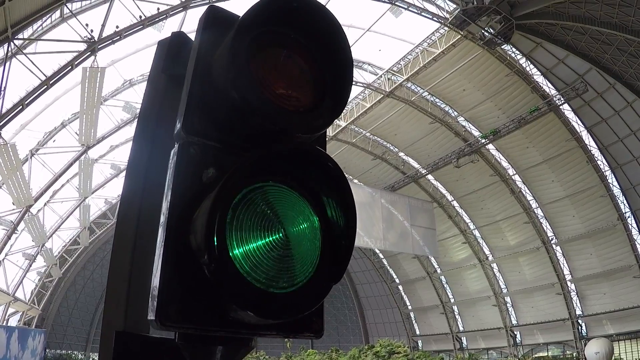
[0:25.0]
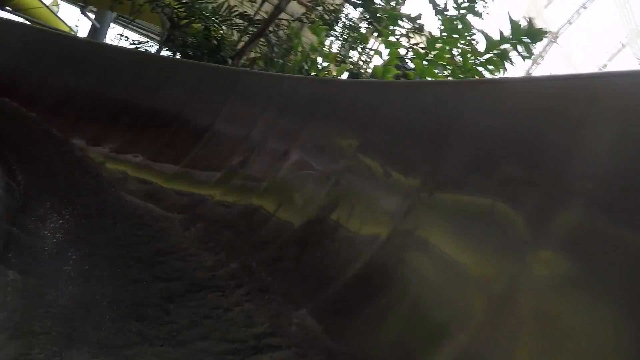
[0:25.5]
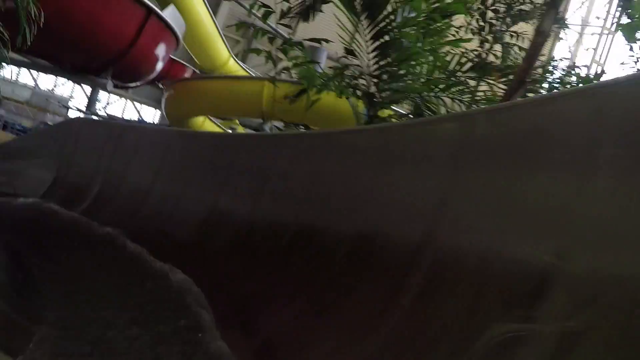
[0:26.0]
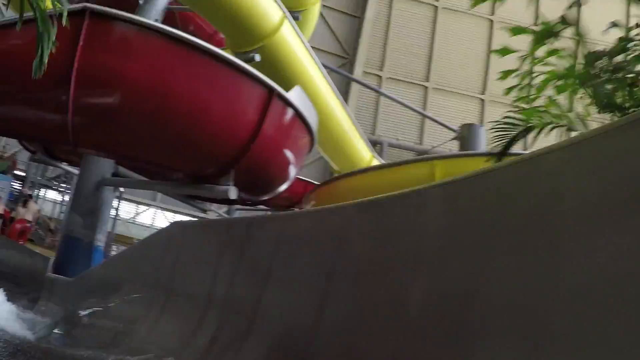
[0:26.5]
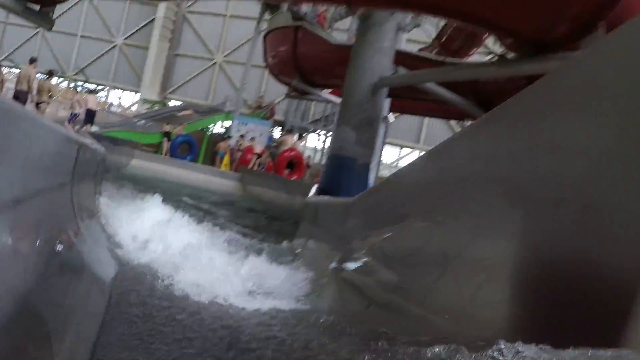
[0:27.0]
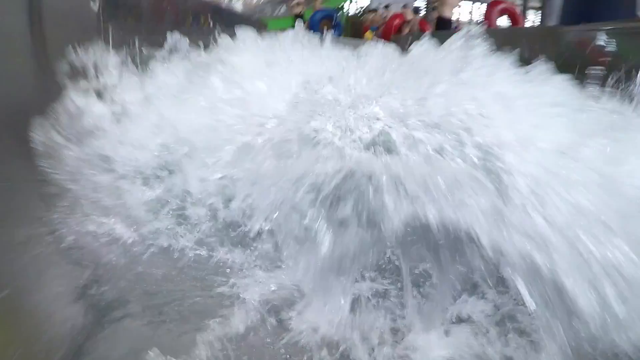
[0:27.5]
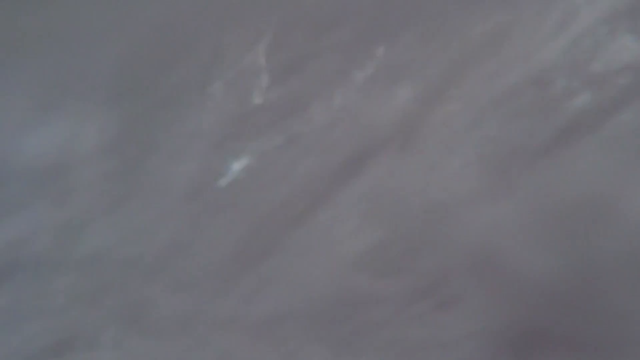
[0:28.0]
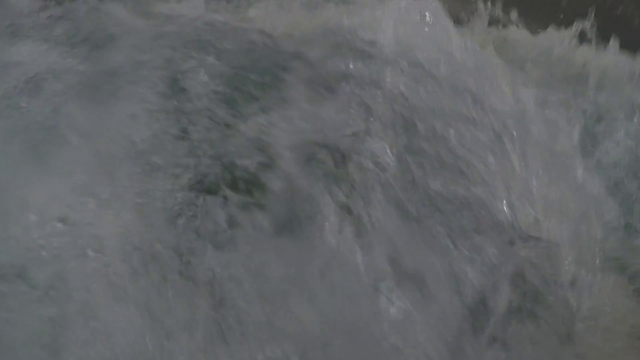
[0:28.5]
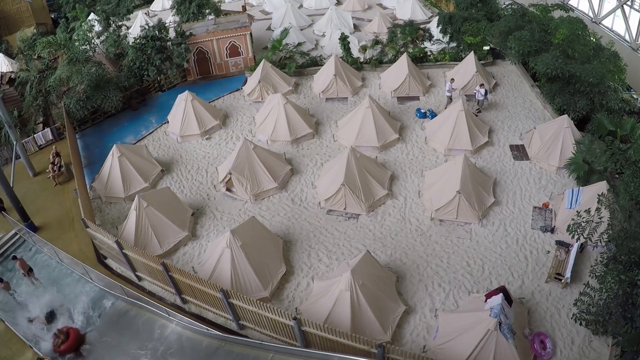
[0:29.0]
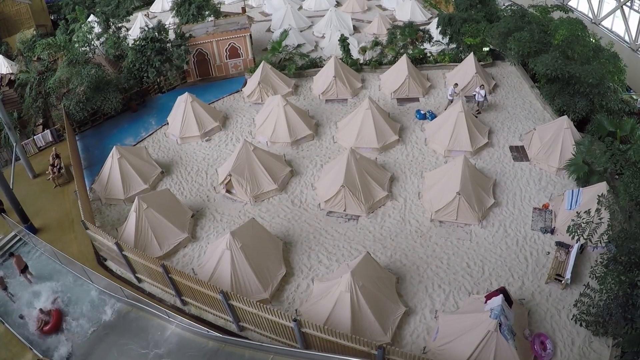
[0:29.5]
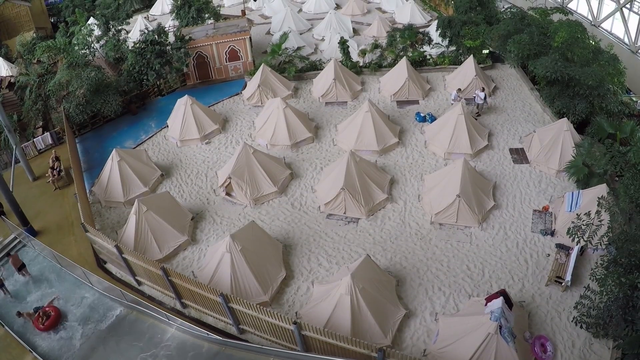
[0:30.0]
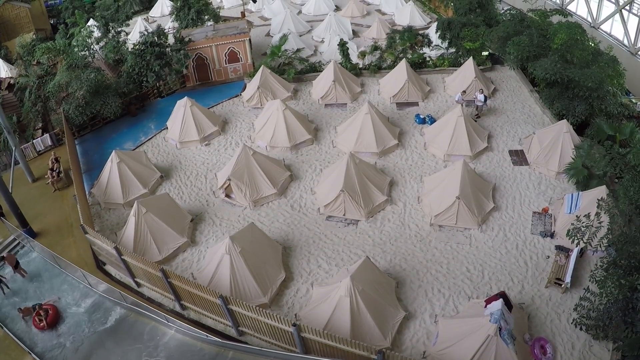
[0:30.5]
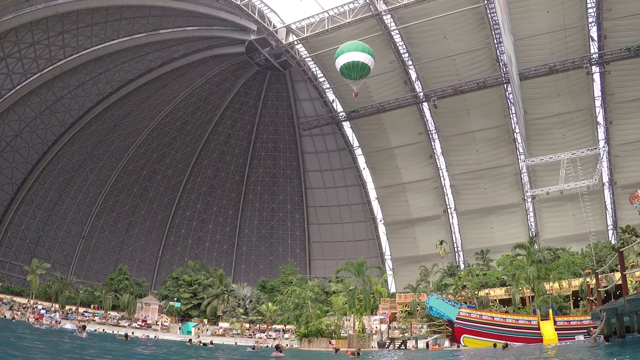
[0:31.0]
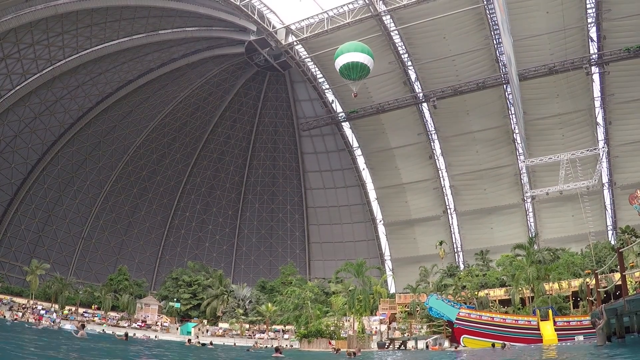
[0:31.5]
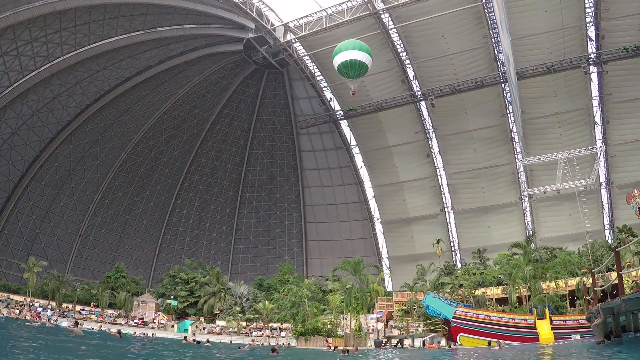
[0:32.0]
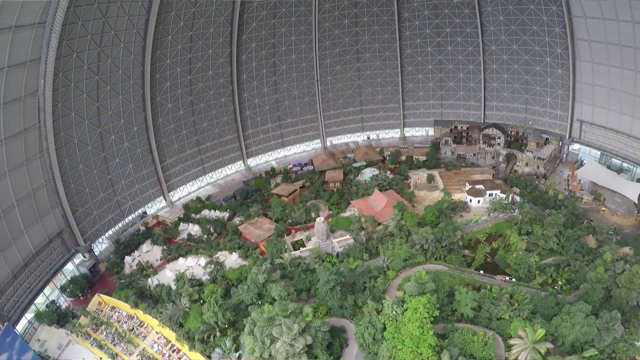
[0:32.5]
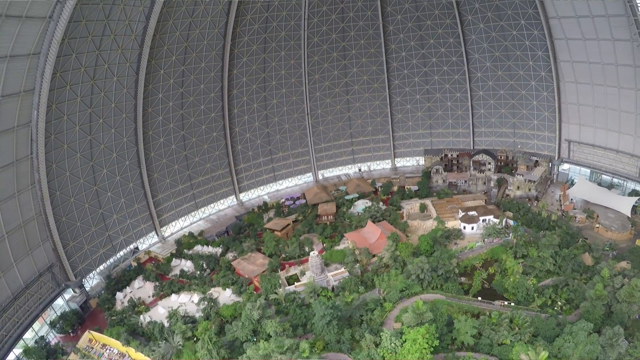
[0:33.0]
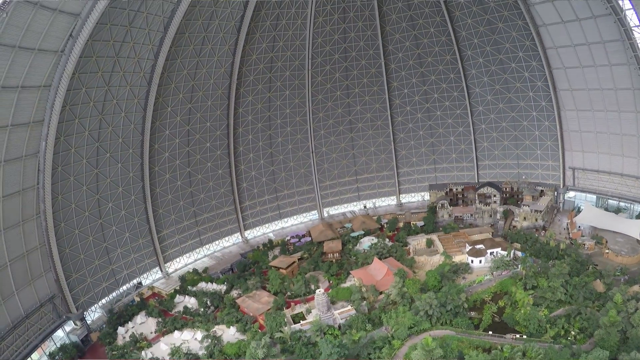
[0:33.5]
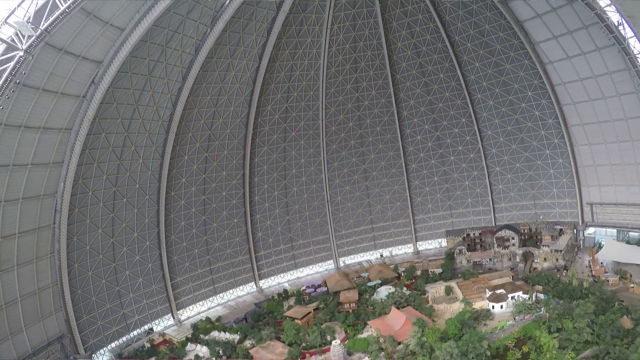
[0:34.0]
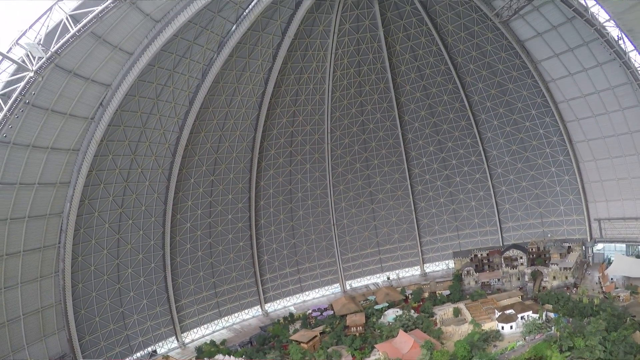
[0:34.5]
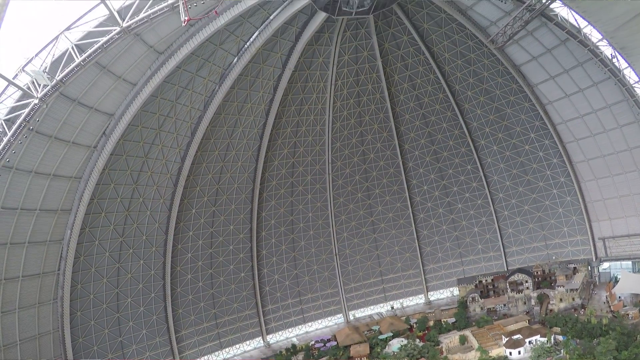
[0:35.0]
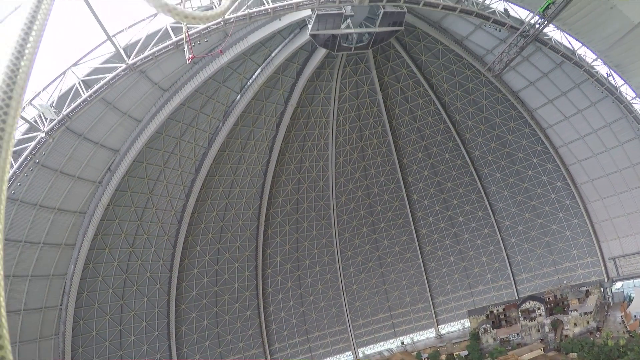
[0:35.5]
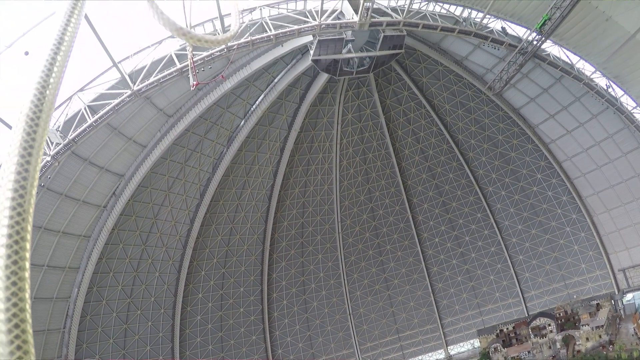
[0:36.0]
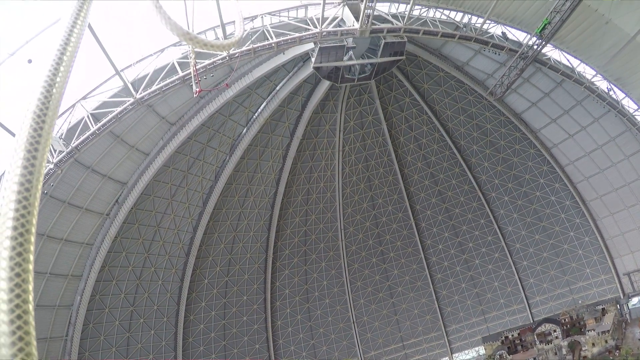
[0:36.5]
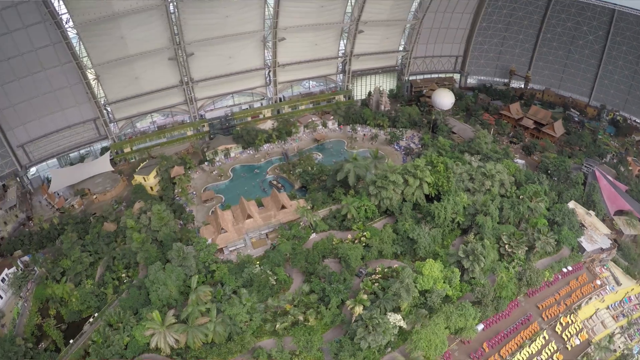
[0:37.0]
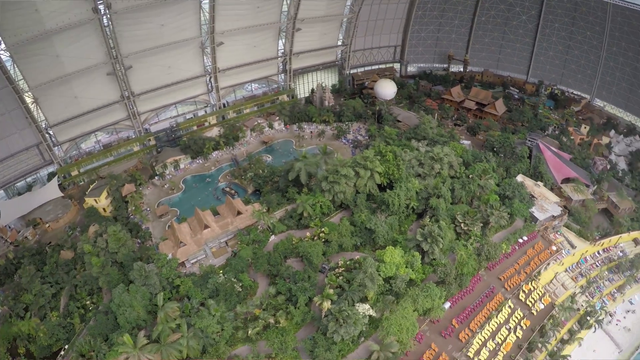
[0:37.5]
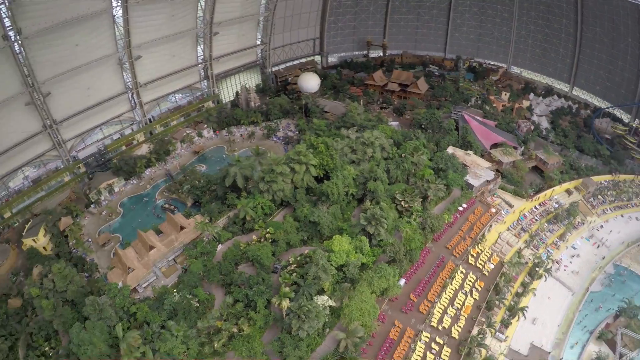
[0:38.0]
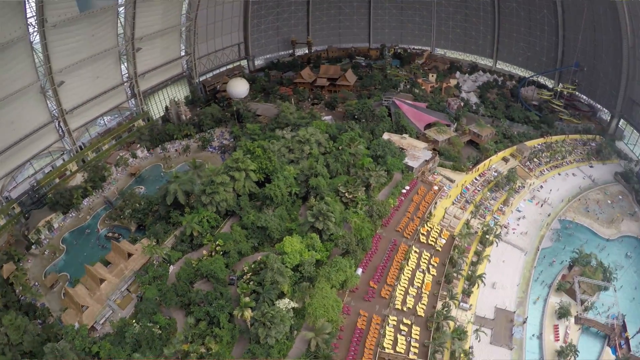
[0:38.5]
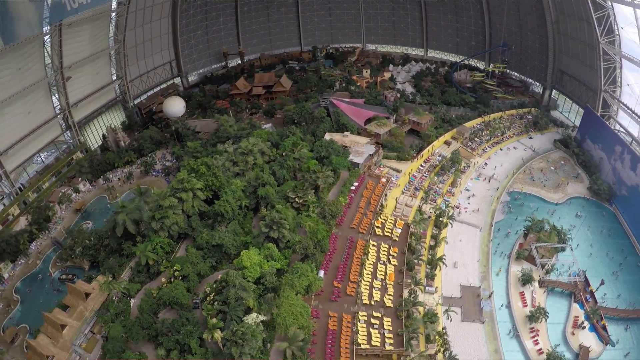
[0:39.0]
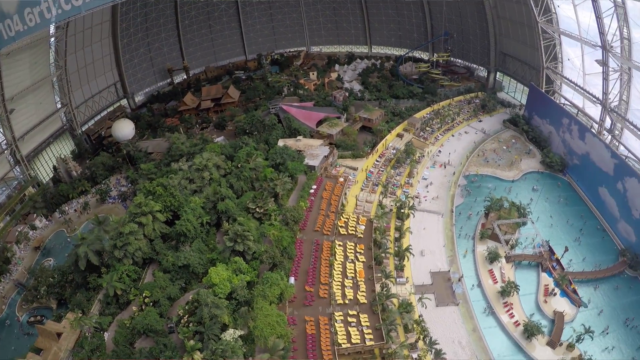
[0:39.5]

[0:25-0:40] A green light is lit. Water rushes through a water slide, shown as if going down the slide. Below the slide, at the bottom to the right, are 17 white tents in what looks like white sand, with two people near one of the tents talking and something blue on the ground near them. The tents are surrounded by a wooden fence, with what looks like a bright blue body of water to their left, trees around the outside, and other tents beyond the trees in the background. The huge silver dome is seen again, looking down on an area with many trees and rooftops of buildings: red rooftops, a gray rooftop and a white building. Streets are visible below, and it looks like a little village inside the dome. The dome is very tall, with vertical struts throughout its top. A wider view of the land inside the dome shows many trees, buildings, a beach, the water, and many chairs set out next to the white sand beach.